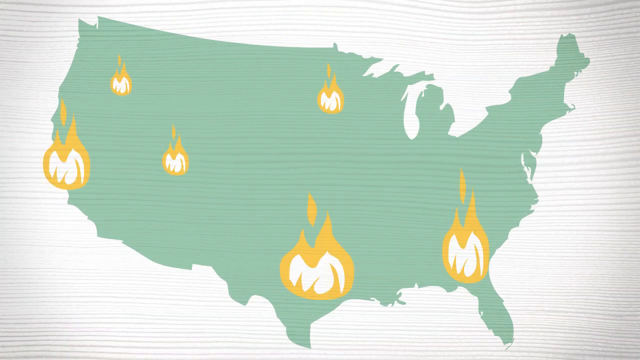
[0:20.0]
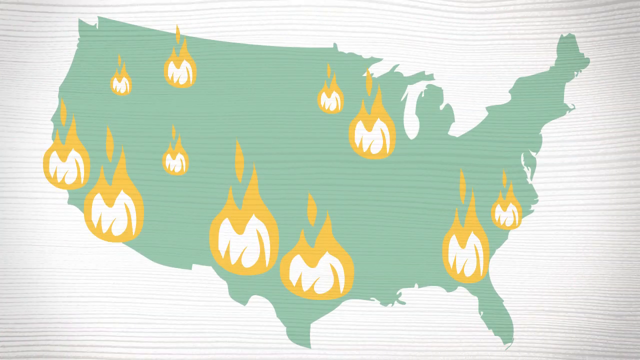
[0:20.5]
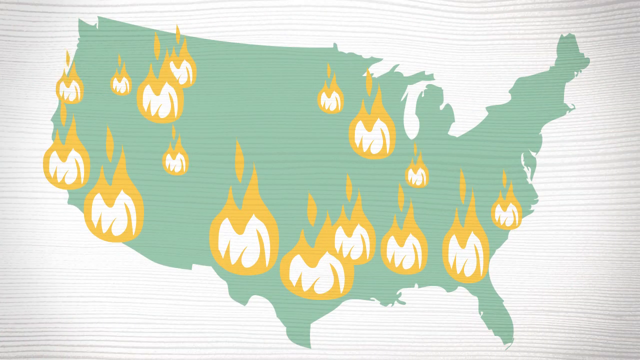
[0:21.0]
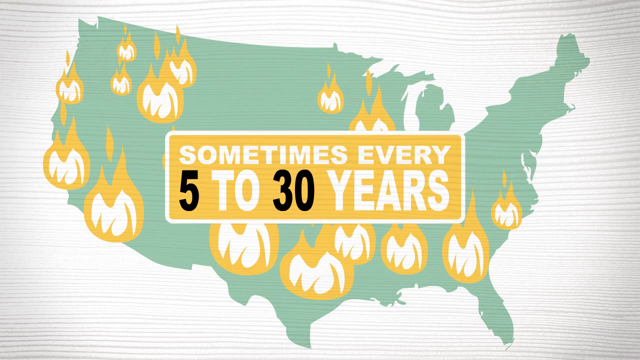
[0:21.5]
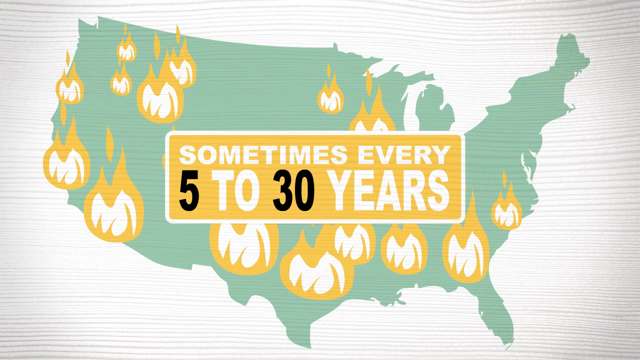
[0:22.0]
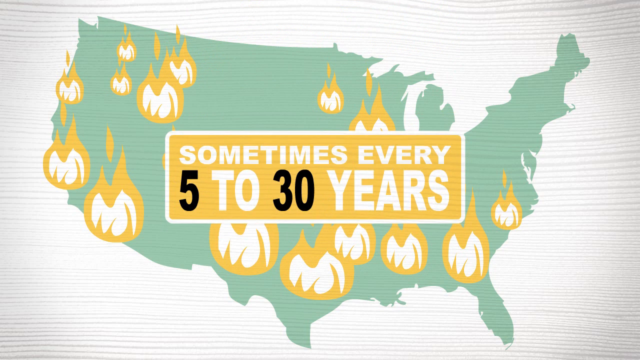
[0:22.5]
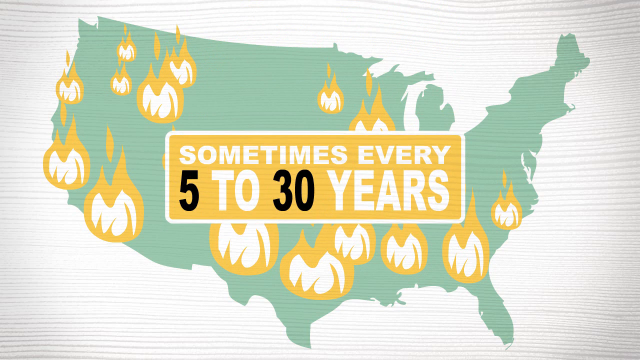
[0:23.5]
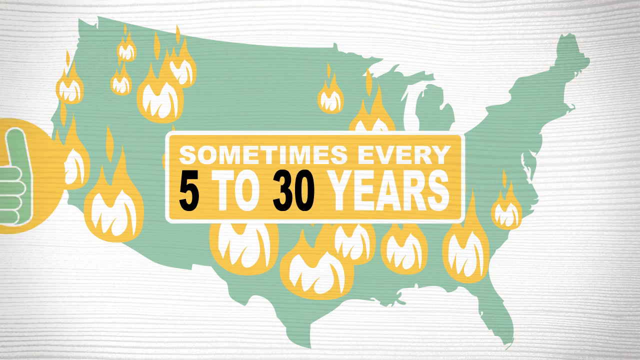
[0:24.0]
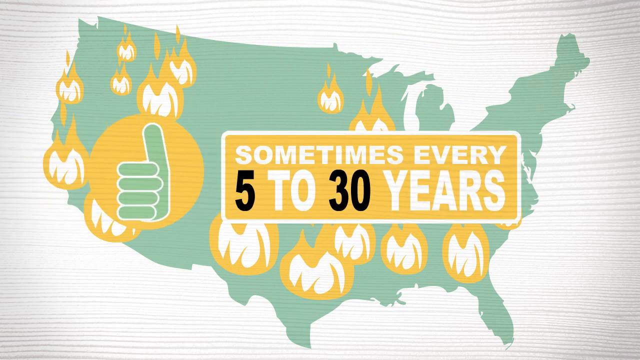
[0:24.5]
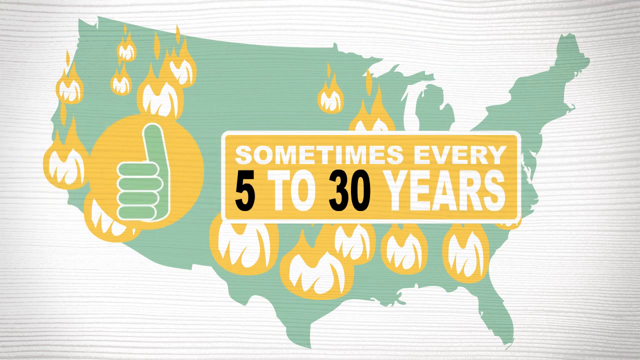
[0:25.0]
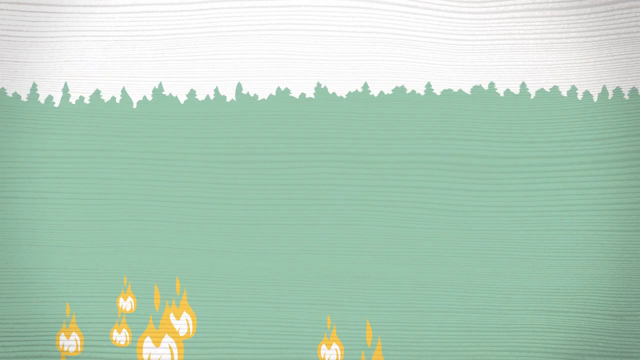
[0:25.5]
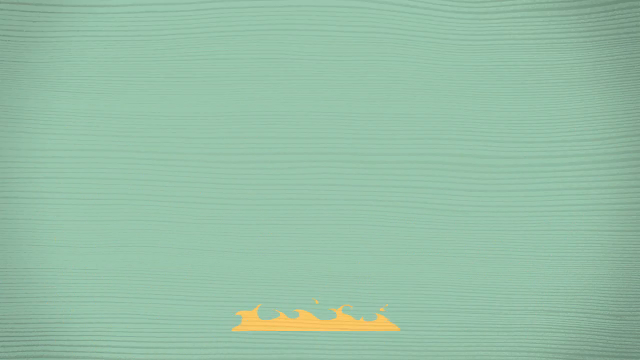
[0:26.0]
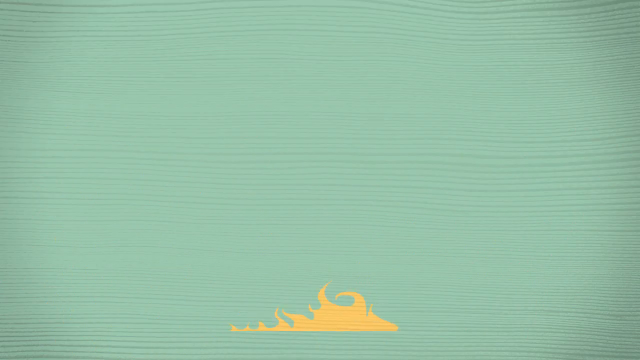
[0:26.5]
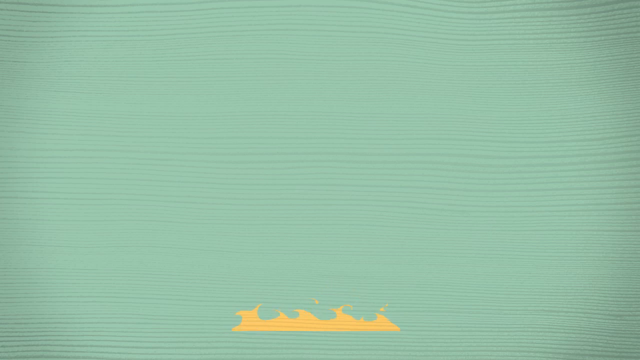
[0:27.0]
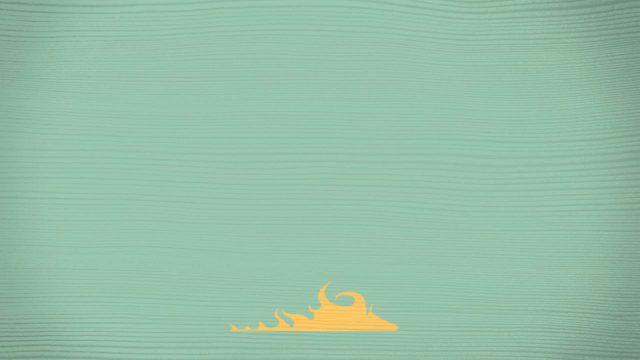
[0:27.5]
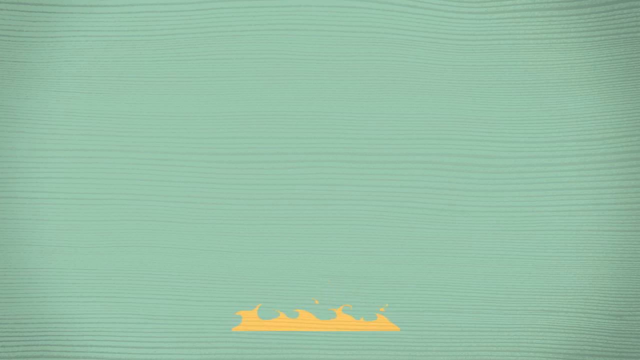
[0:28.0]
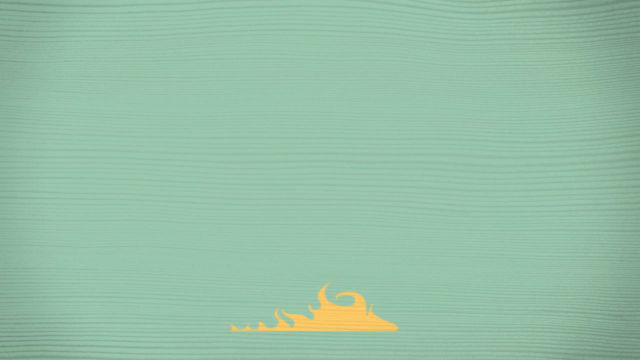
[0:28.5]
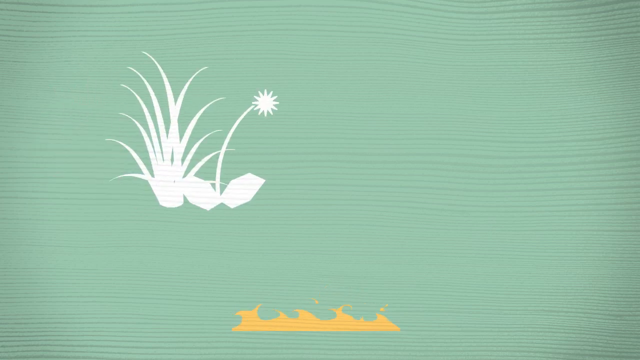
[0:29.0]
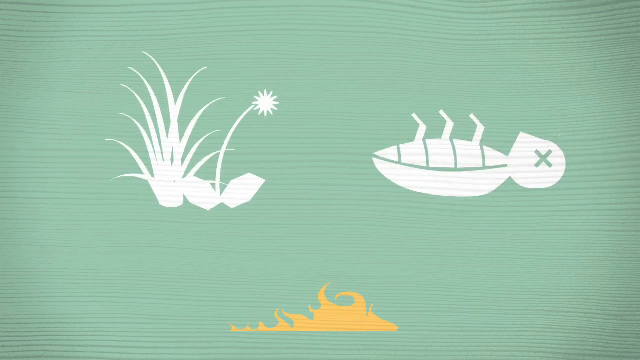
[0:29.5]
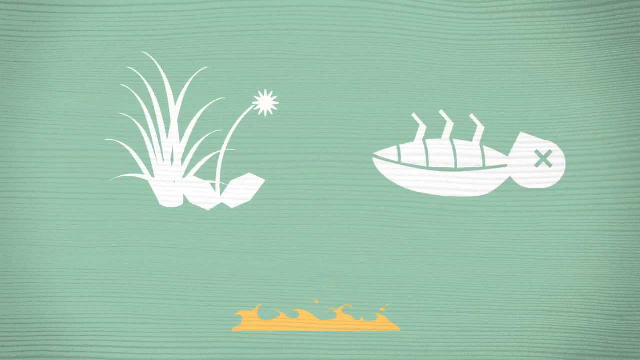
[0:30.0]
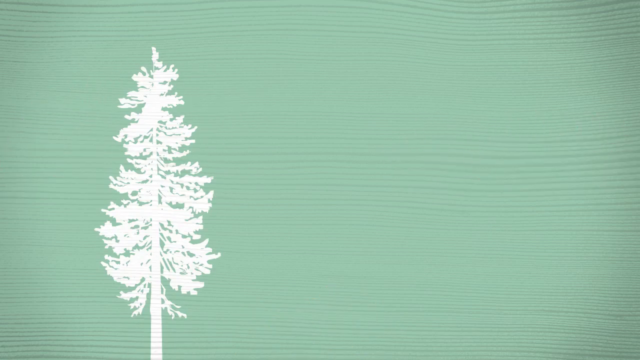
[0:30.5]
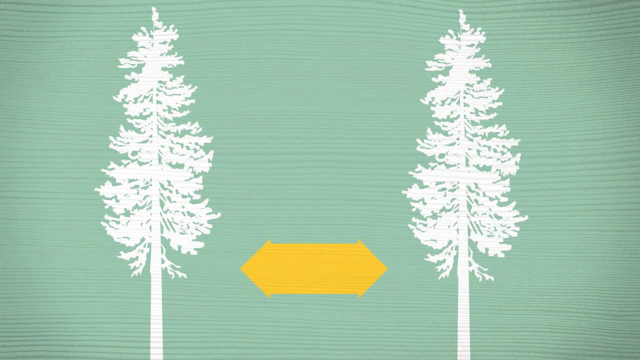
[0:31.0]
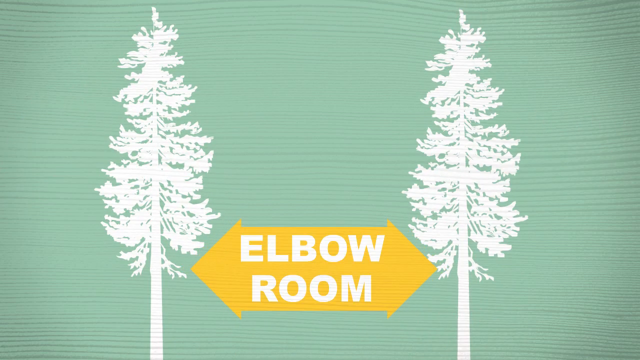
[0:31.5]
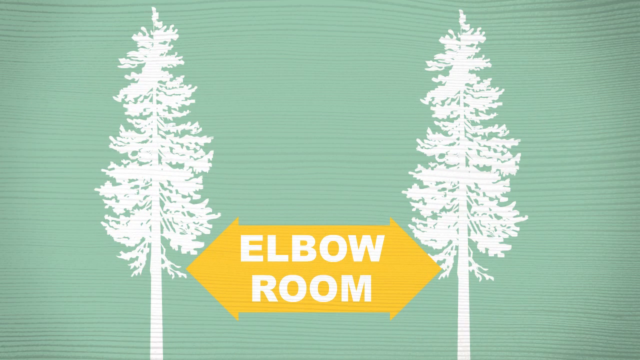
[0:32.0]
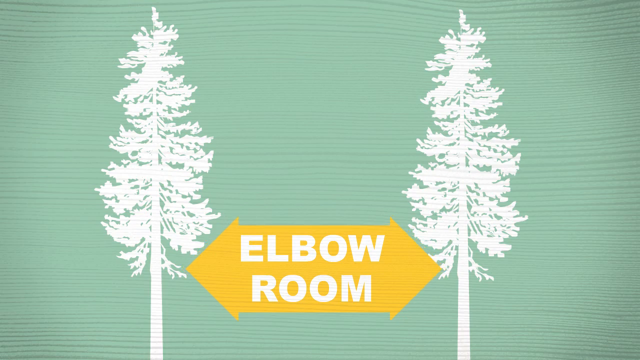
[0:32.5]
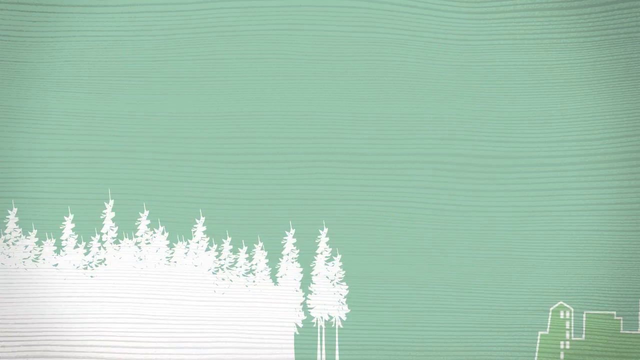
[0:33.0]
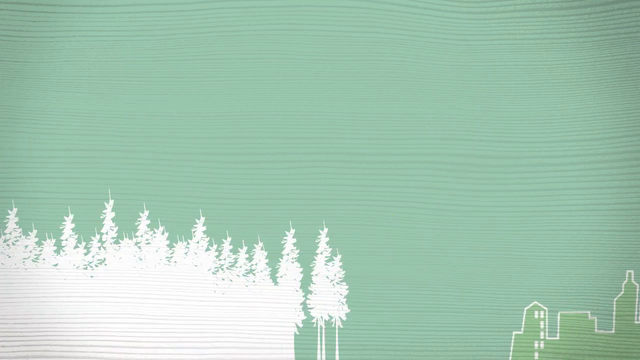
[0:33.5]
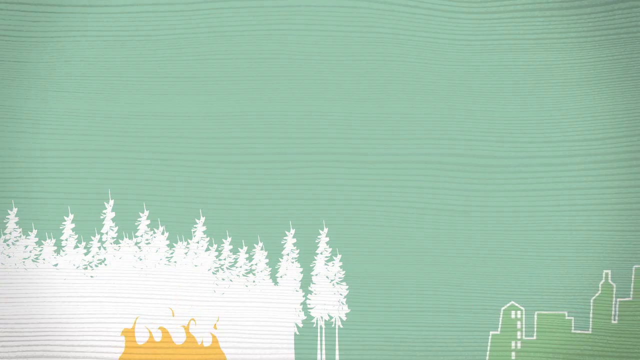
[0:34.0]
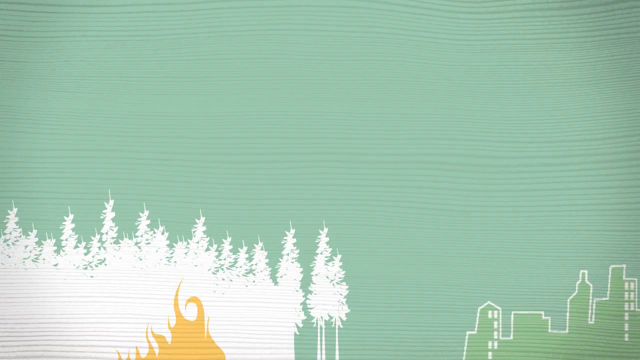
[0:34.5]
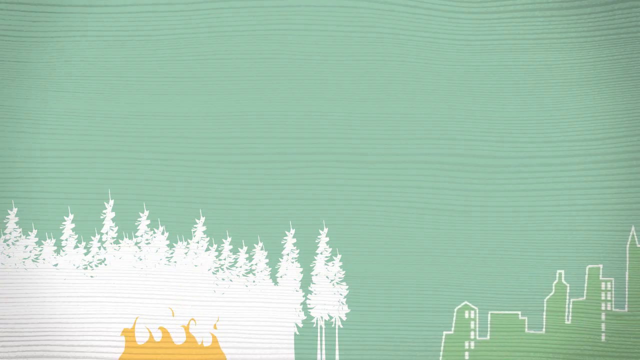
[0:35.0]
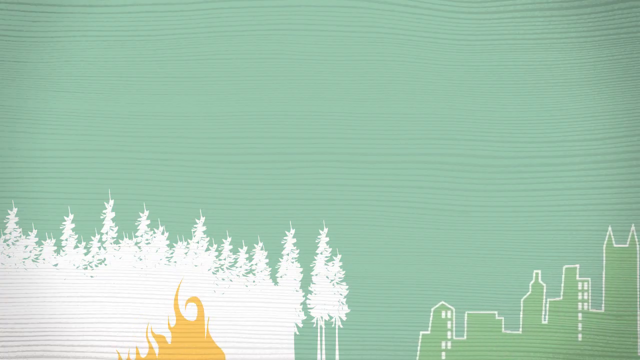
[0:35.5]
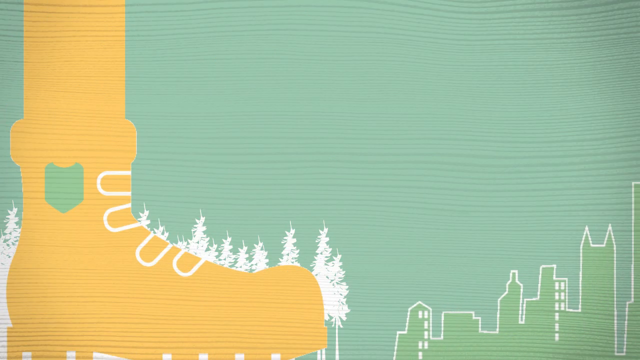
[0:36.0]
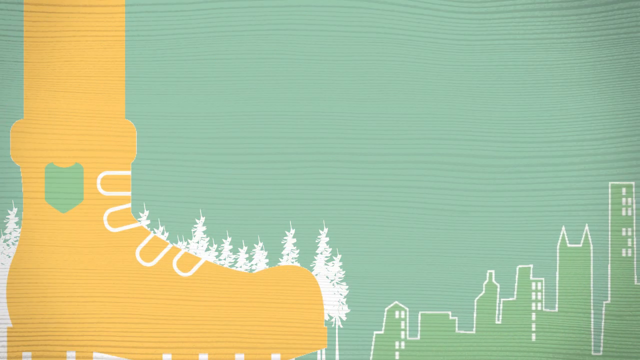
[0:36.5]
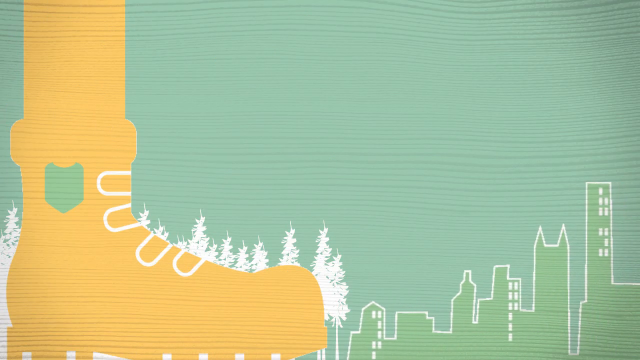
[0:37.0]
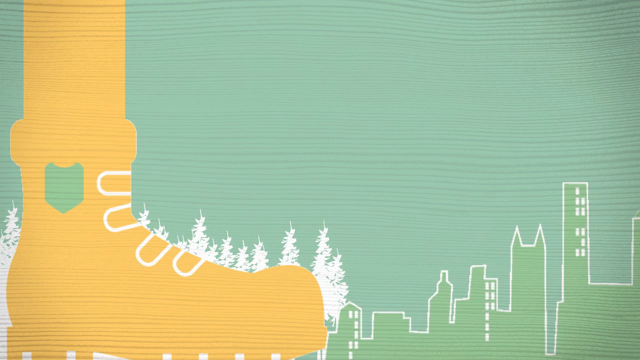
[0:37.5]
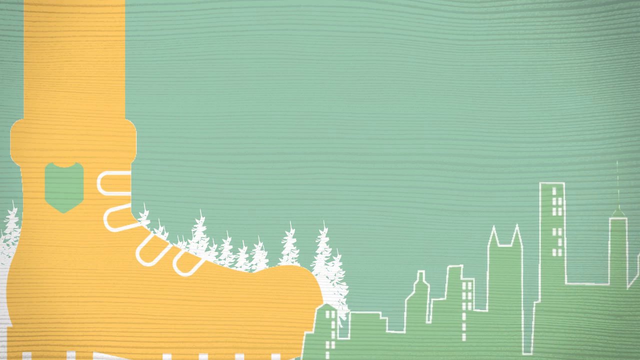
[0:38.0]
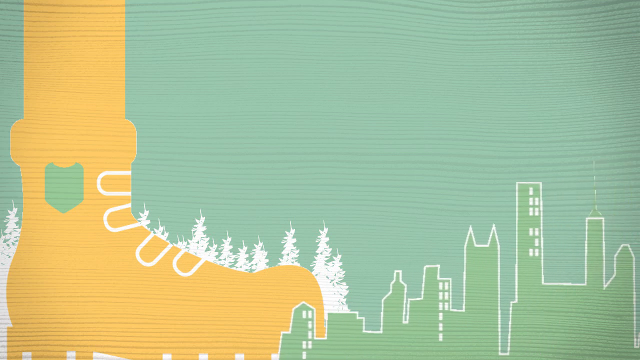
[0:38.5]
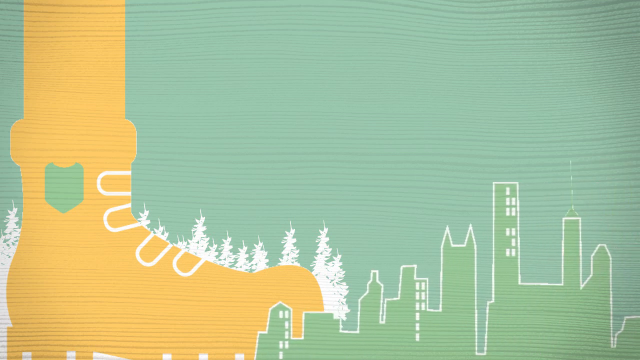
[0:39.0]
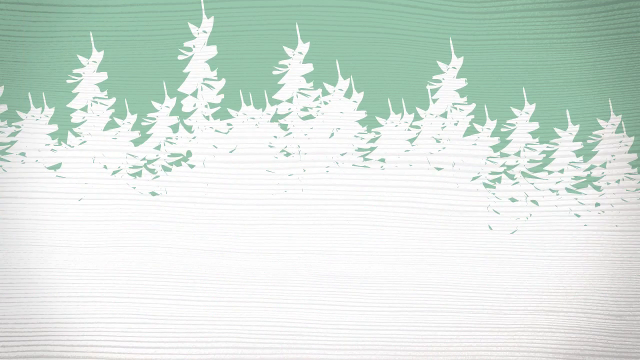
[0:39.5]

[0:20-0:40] The United States map continues, the map itself teal against a white background, with little heads of fire popping up all over the country. The text "sometimes every 5 to 30 years" appears with a thumbs up next to it. A fire rages at the bottom, and there is a flower and grass, followed by a dead bug. A tree and then two trees appear, with the text "Elbow Room" pointing to the trees. Next is a little city and a forest, with a fire in the forest; a shoe comes to stop the fire, and the city continues to move. Some white trees follow.